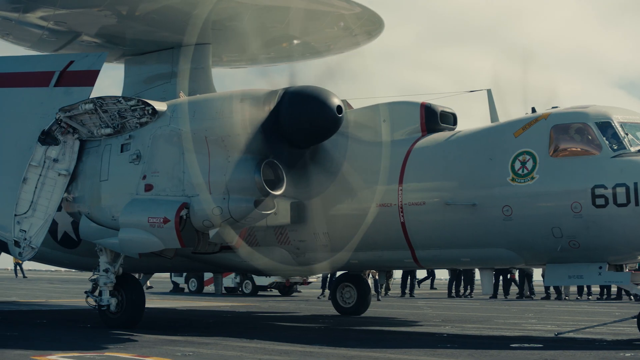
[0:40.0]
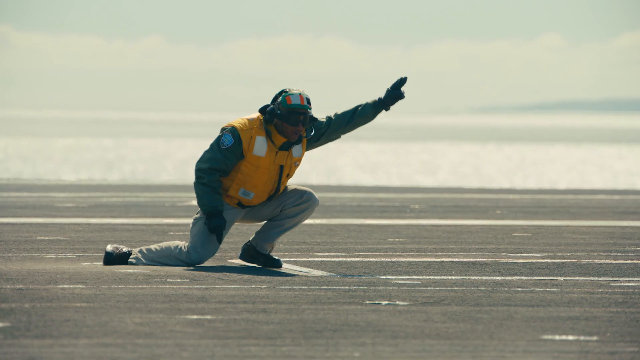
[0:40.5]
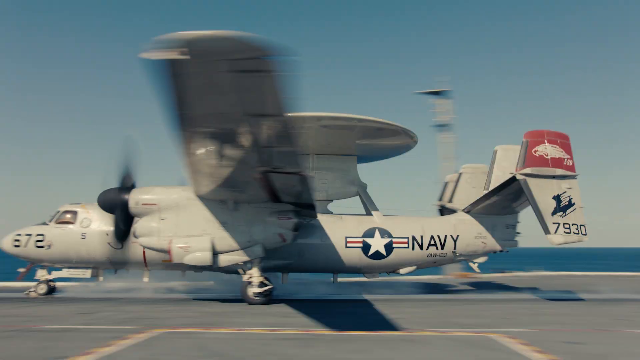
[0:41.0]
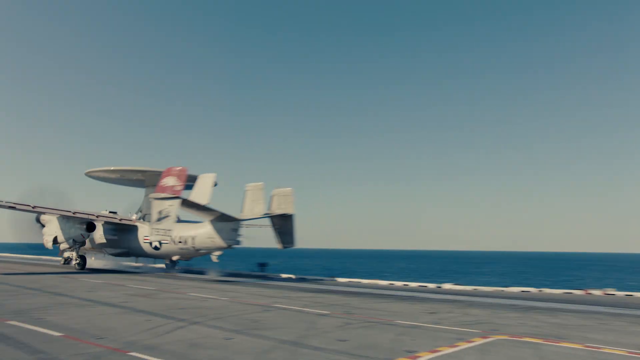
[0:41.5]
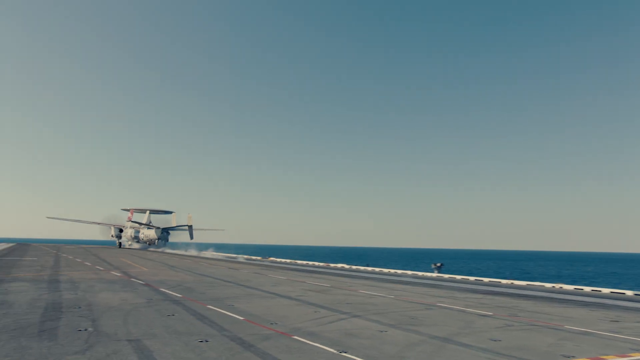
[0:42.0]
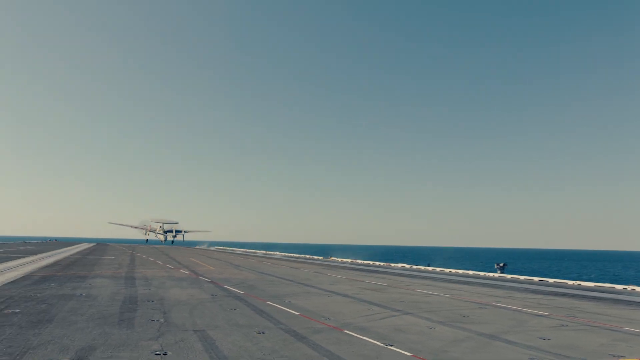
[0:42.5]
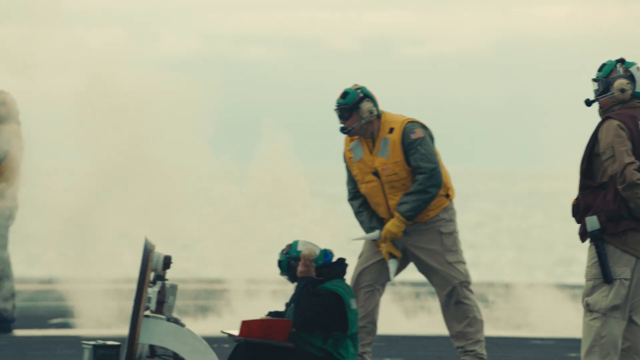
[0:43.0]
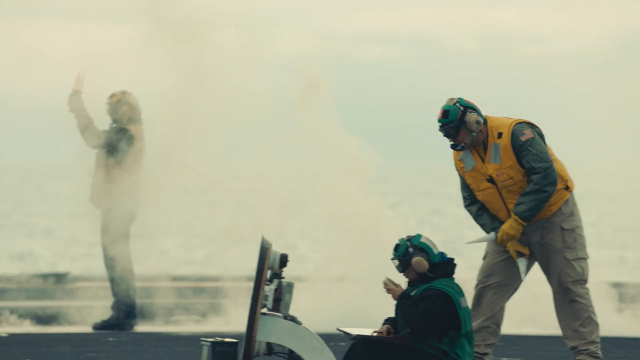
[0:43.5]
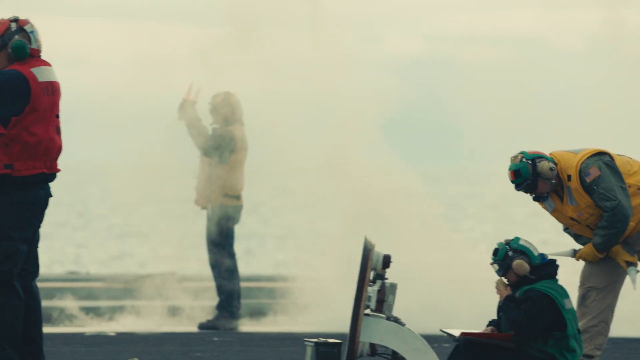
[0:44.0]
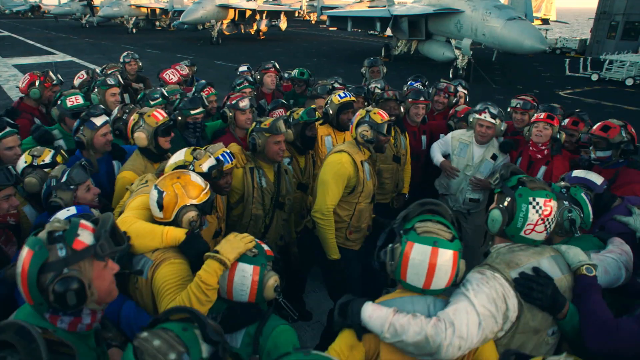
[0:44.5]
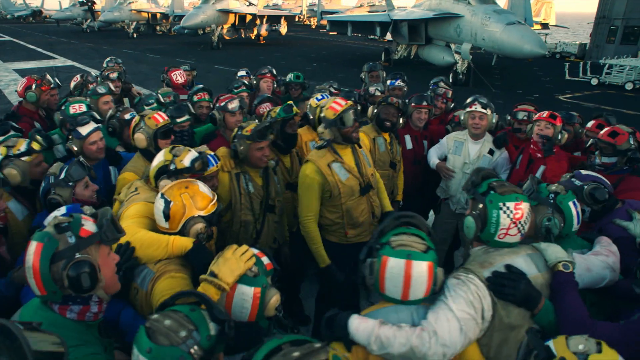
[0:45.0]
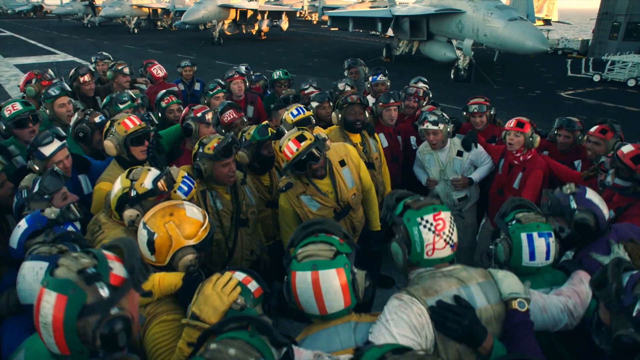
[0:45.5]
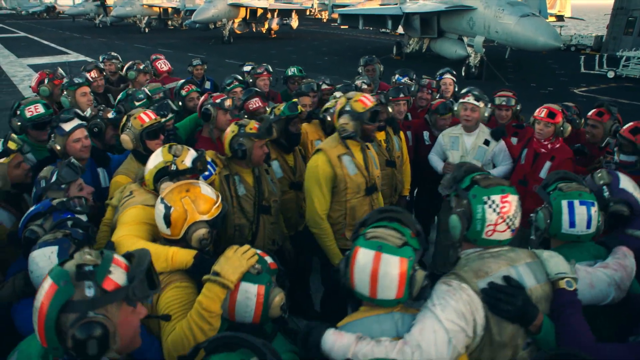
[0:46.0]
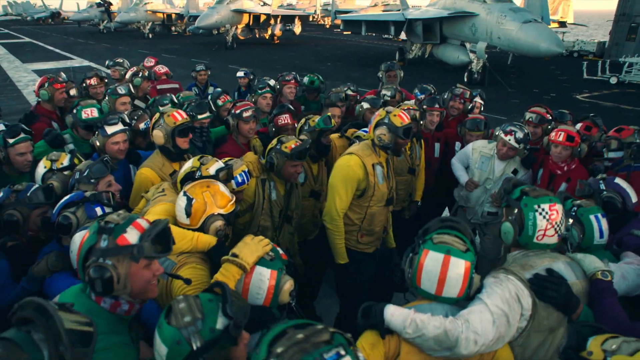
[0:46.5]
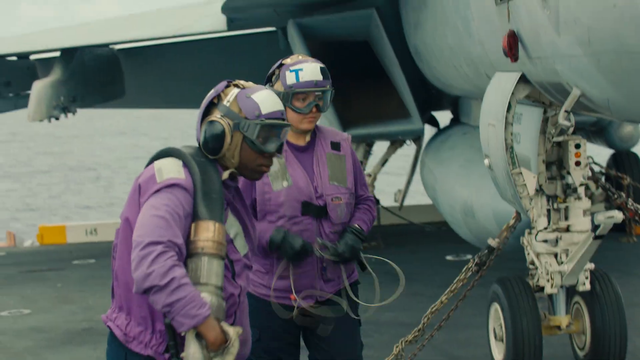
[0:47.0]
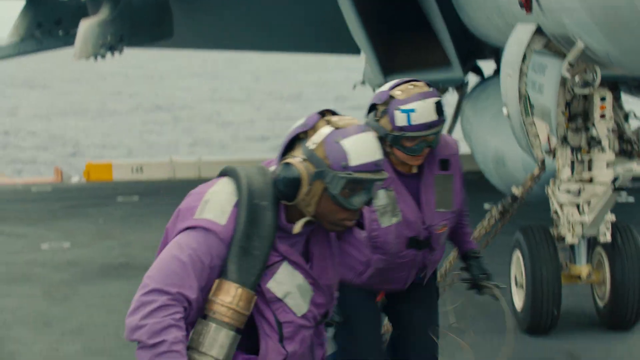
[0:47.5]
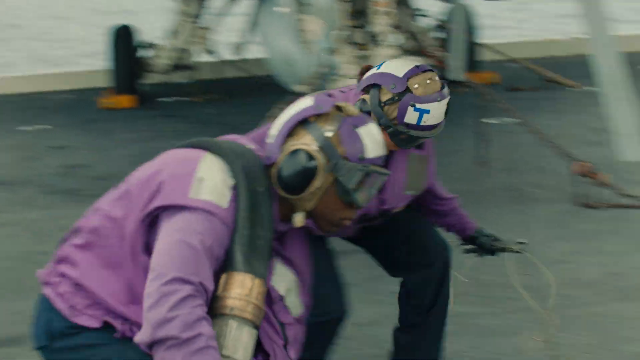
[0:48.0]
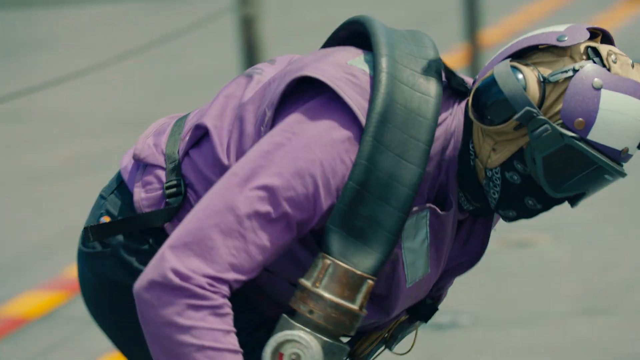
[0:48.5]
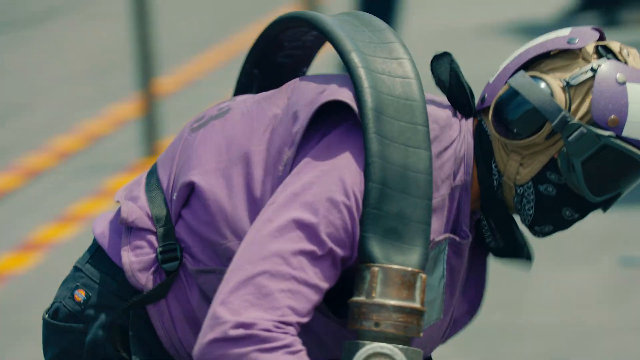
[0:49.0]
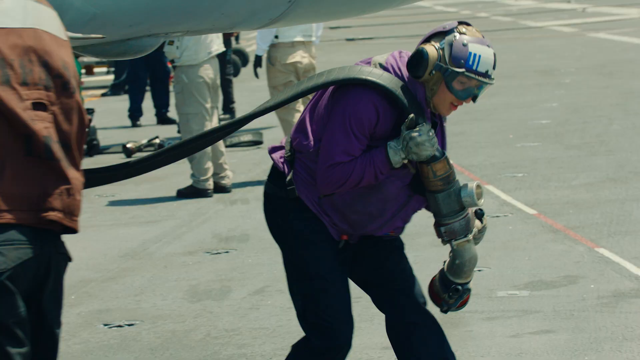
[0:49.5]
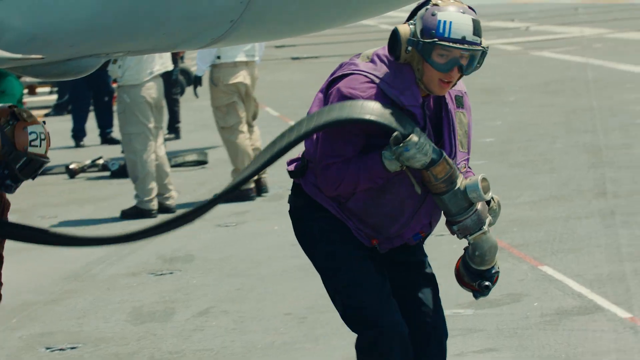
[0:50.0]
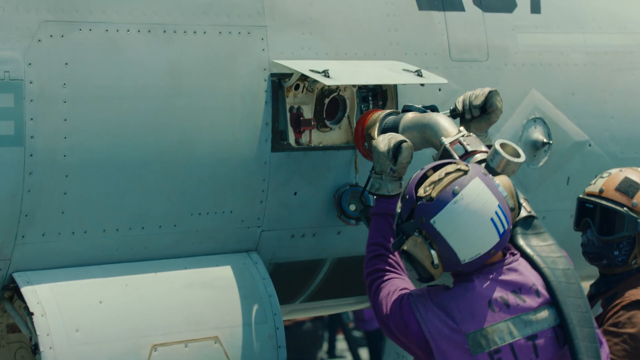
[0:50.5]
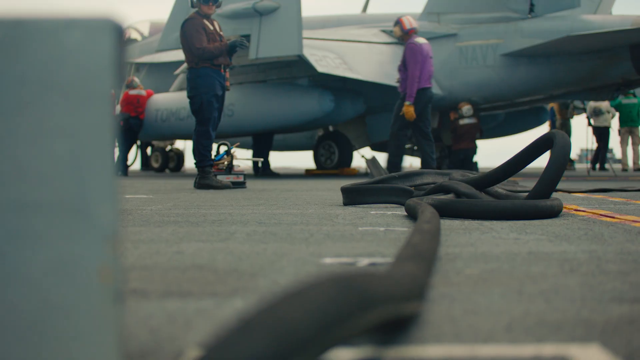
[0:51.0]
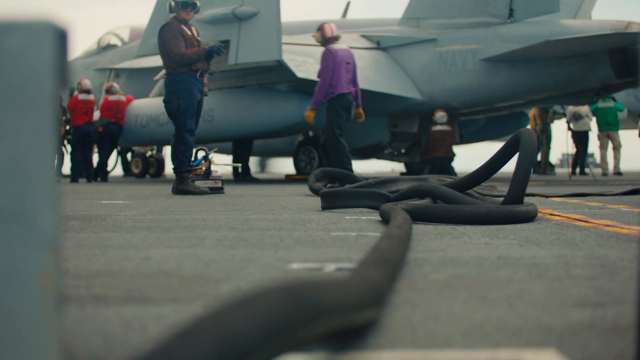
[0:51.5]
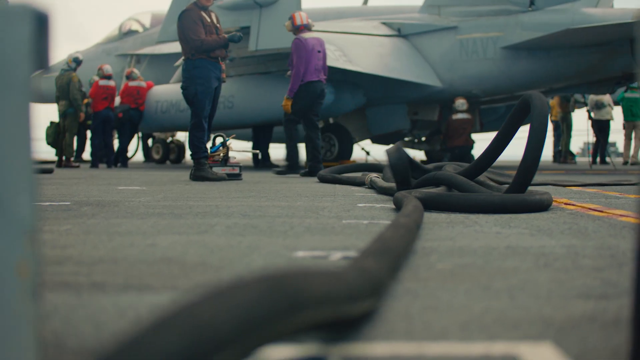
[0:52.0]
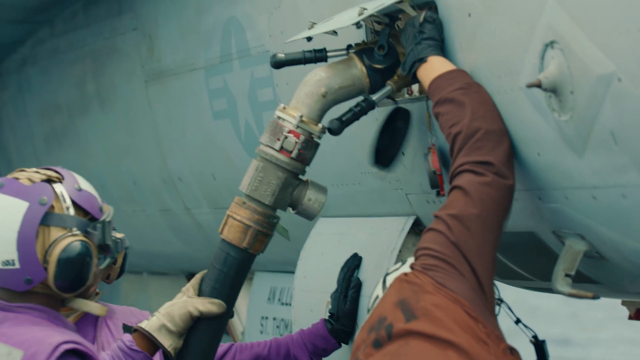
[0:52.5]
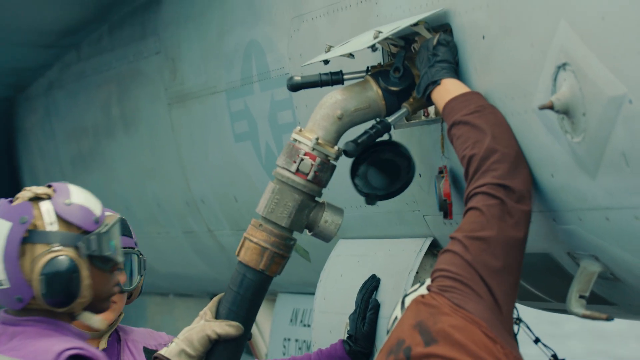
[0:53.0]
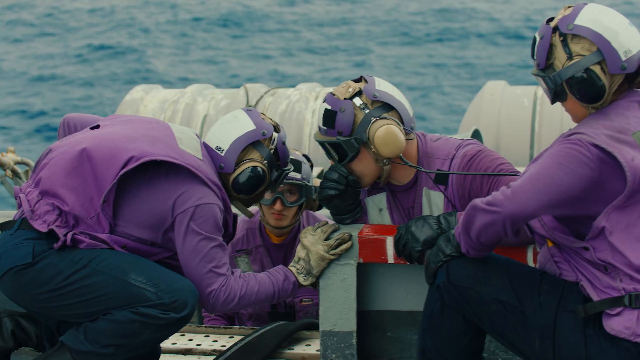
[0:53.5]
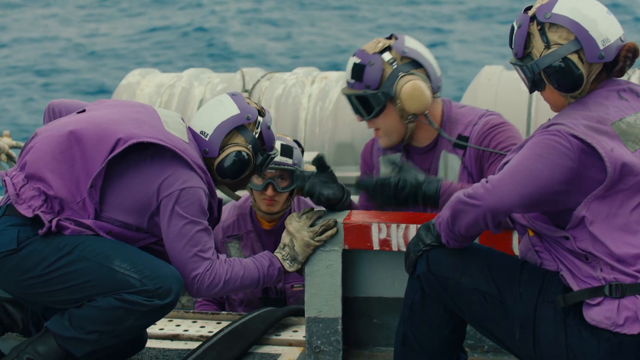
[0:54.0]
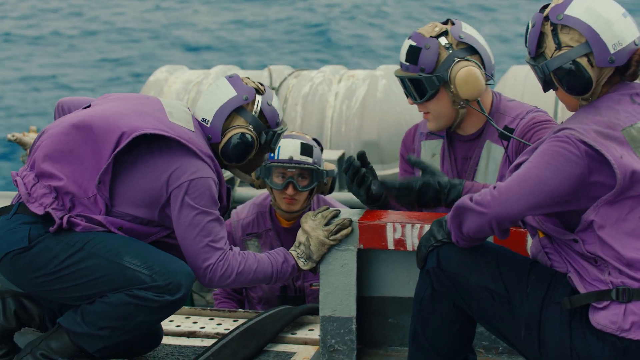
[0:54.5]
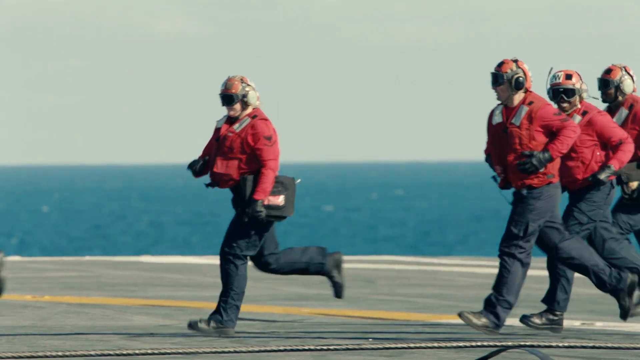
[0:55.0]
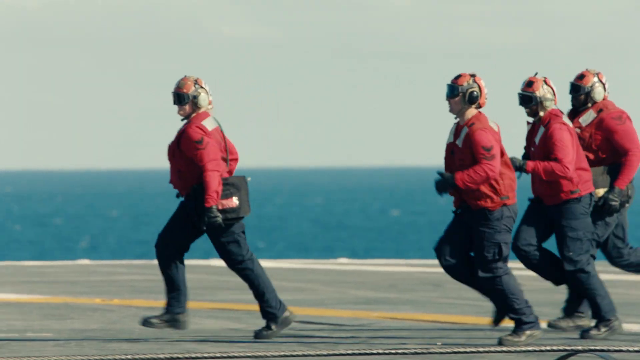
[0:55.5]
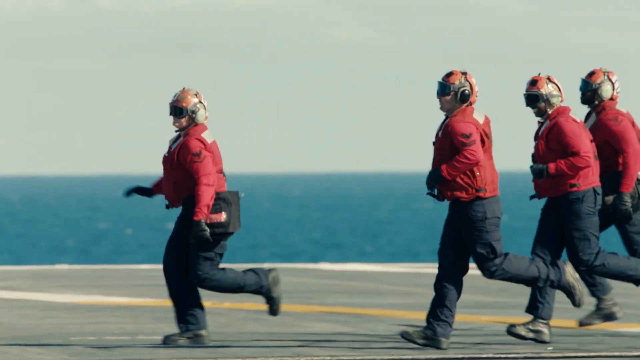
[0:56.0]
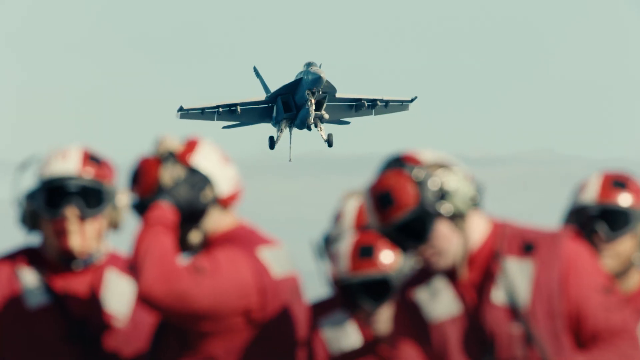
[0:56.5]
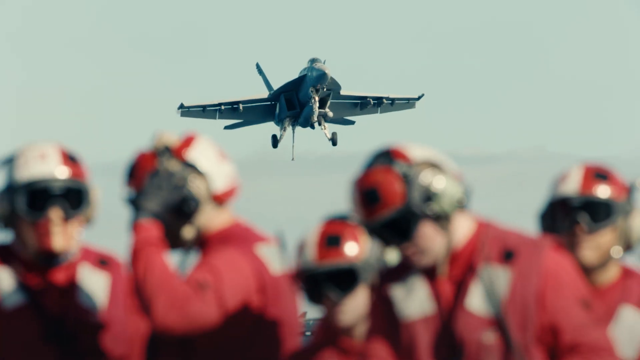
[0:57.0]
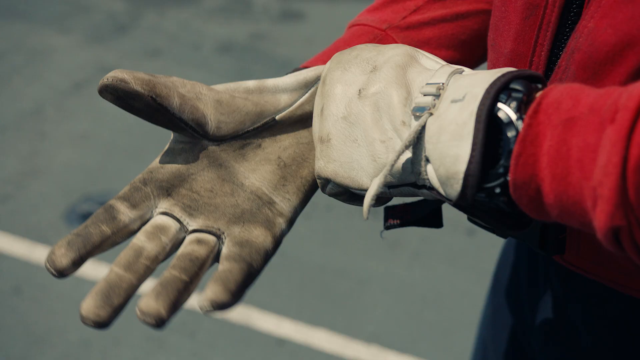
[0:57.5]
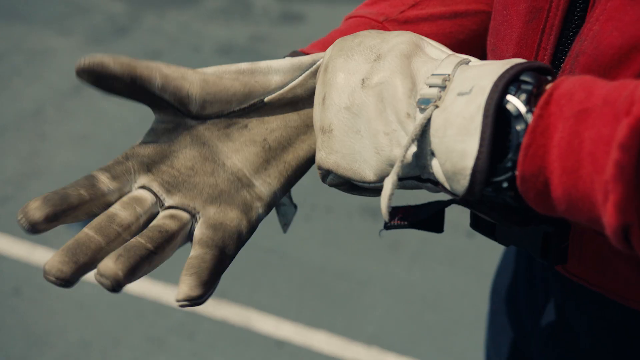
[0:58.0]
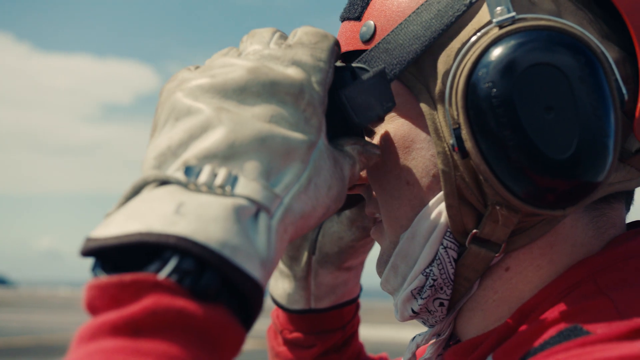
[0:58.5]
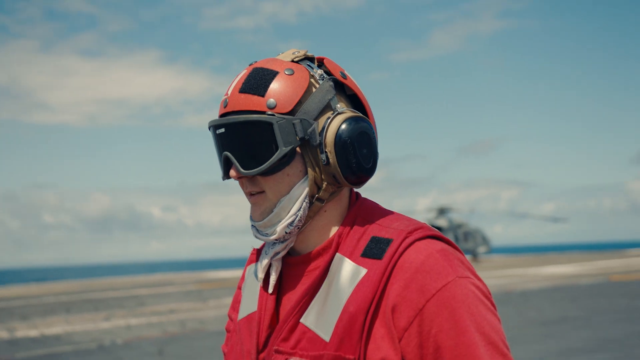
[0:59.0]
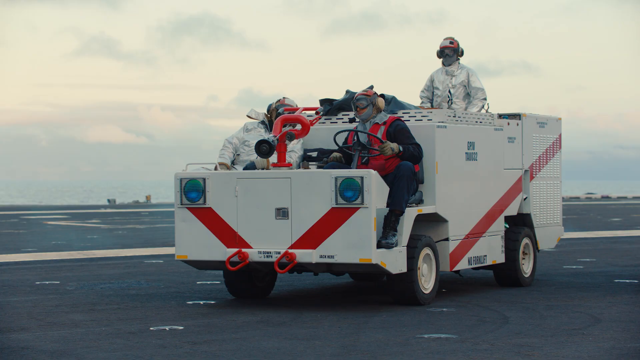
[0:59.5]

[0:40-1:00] A man kneels on the tarmac and points off toward the right, and then a plane takes off. Several different flight controllers are shown, followed by a group of them standing together, many with their arms around each other; they seem to be singing and rocking back and forth, kind of to a beat. Two flight controllers in purple bend down and run across the tarmac; they appear to be rapidly fueling a plane as they connect a hose, and a wider shot shows the hose along the tarmac as it fills up. A close-up shows four controllers in purple uniforms talking, followed by a group all in red running across the tarmac, a quick view of these same controllers with a plane flying overhead, and a close-up of someone putting on gloves and goggles and beginning to walk across. Finally, someone drives a very rectangular white vehicle across the tarmac.